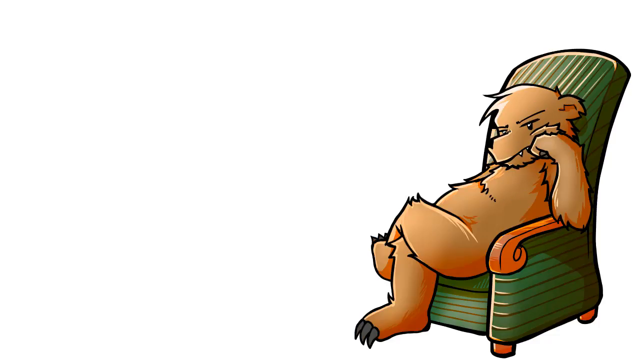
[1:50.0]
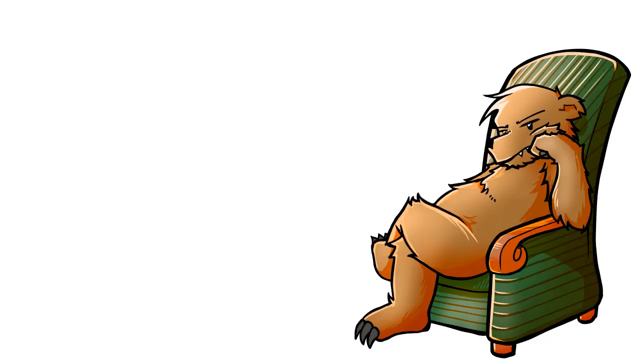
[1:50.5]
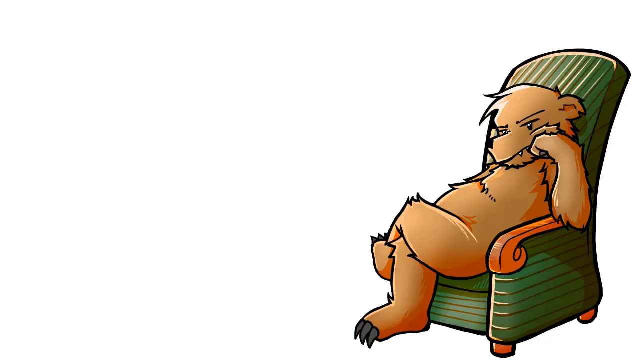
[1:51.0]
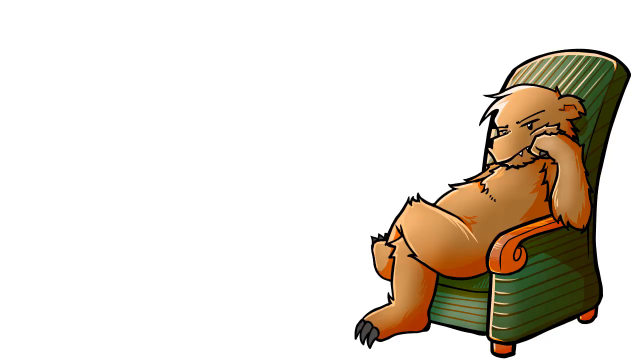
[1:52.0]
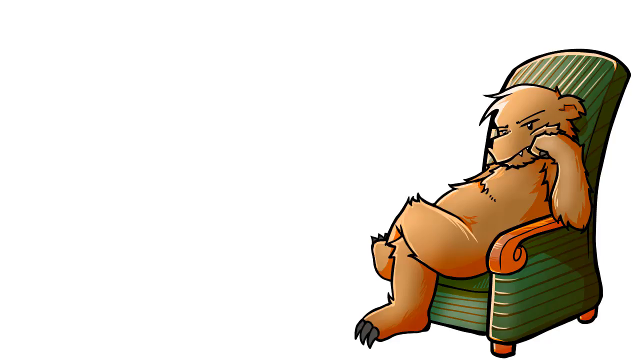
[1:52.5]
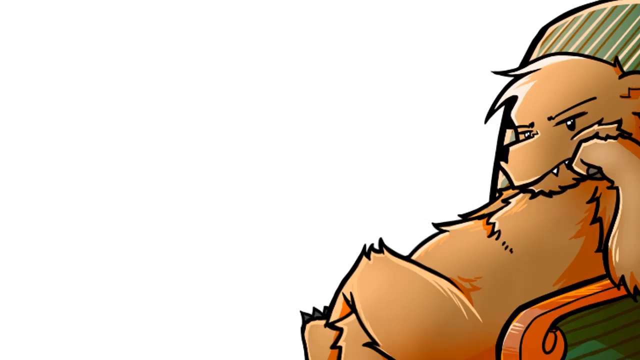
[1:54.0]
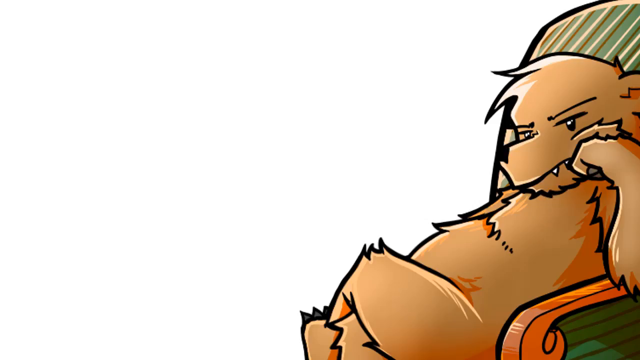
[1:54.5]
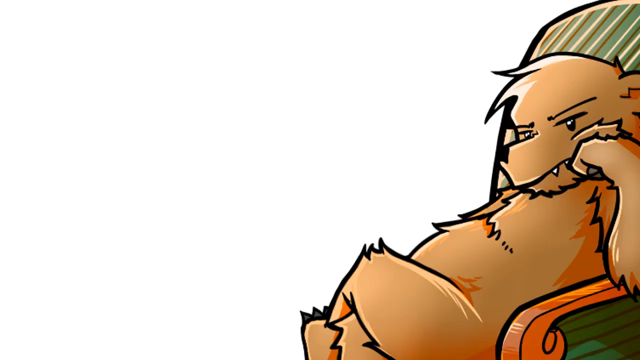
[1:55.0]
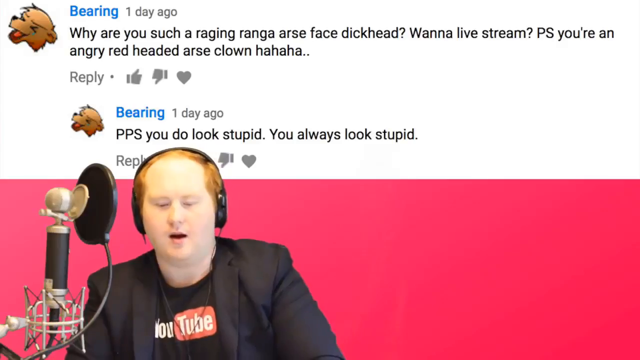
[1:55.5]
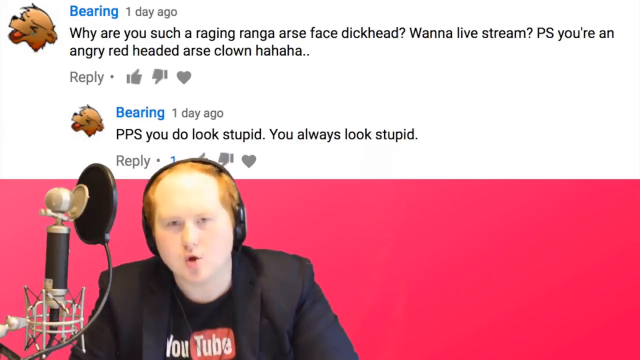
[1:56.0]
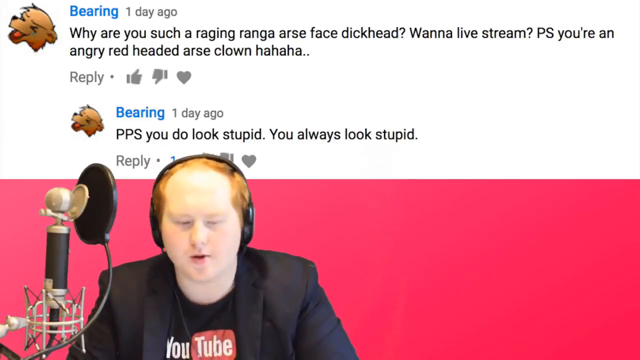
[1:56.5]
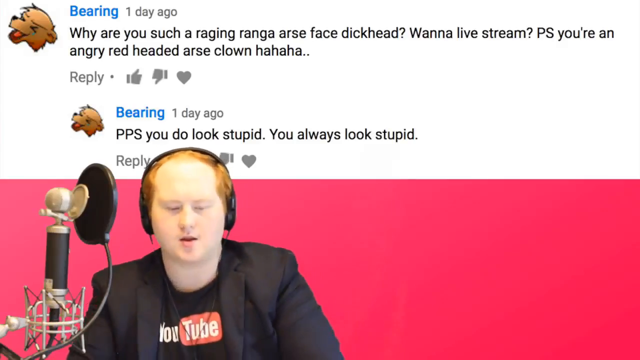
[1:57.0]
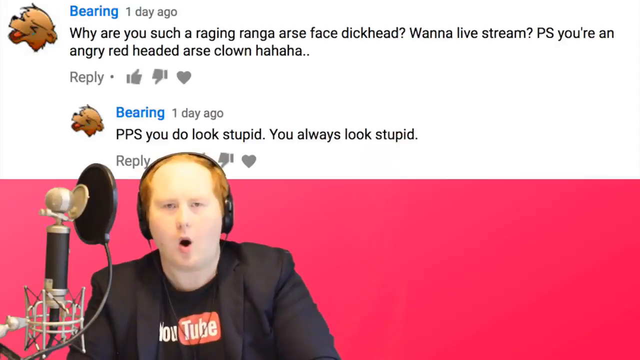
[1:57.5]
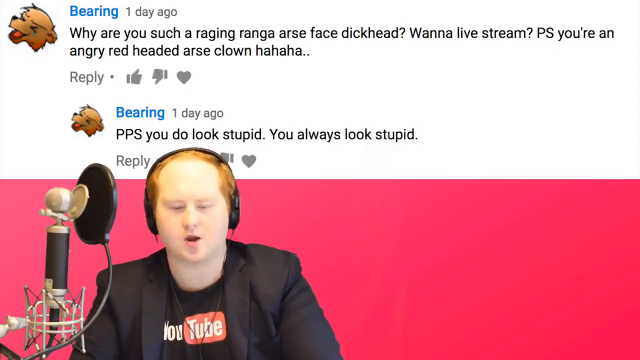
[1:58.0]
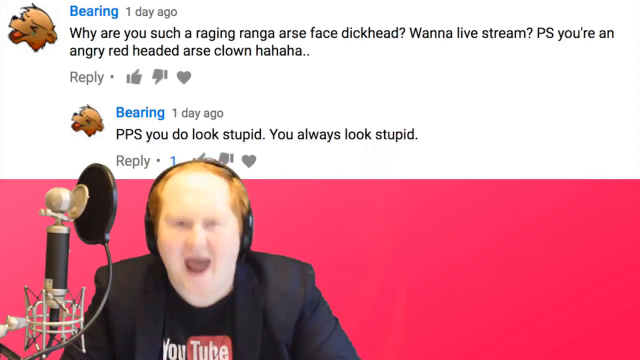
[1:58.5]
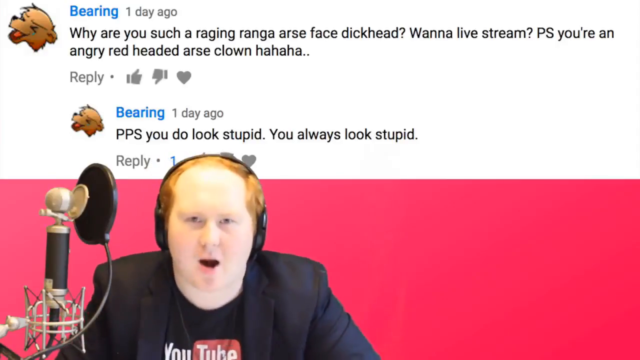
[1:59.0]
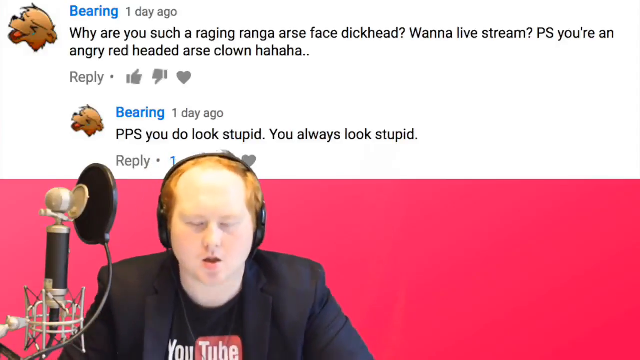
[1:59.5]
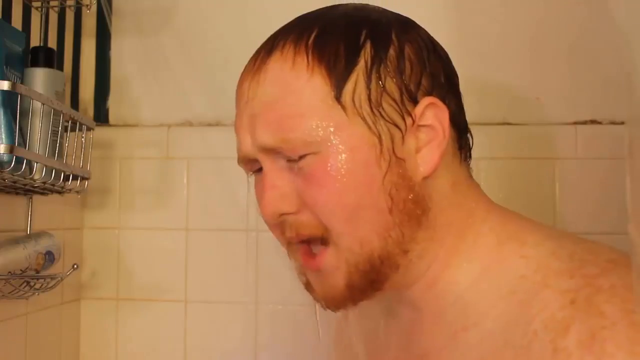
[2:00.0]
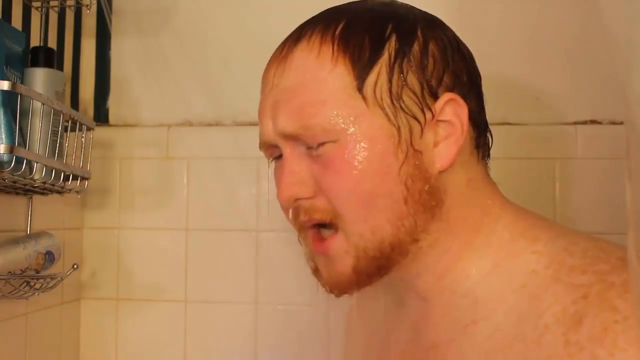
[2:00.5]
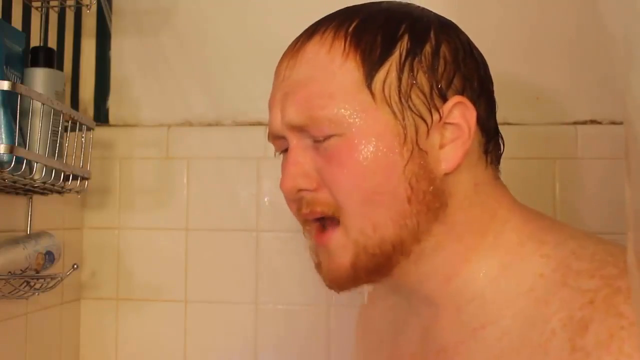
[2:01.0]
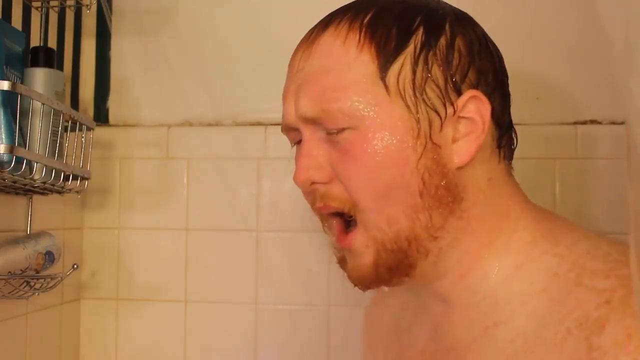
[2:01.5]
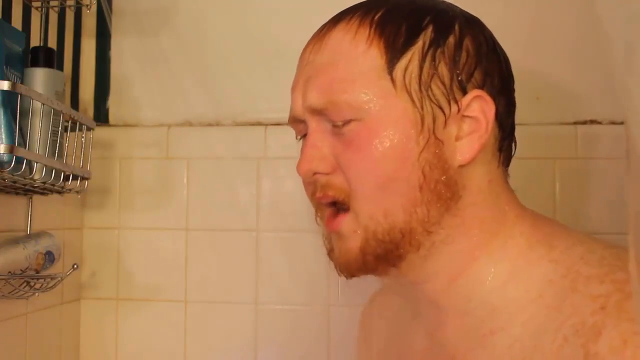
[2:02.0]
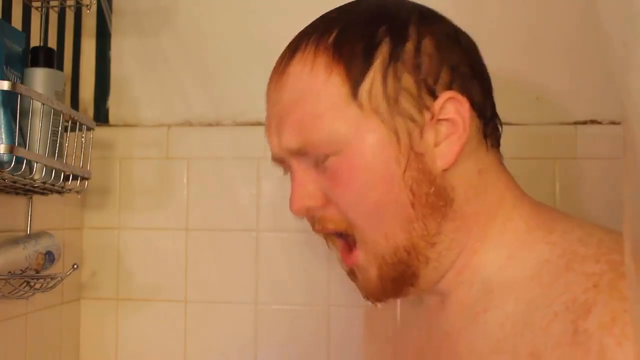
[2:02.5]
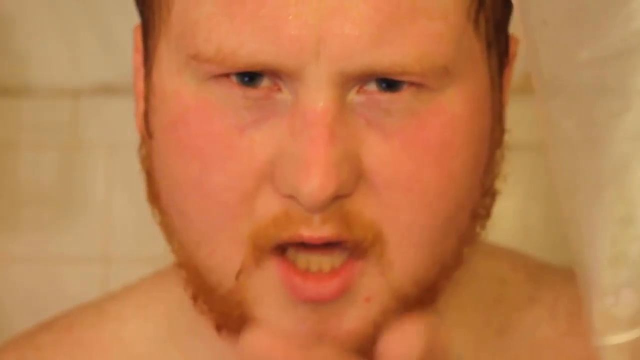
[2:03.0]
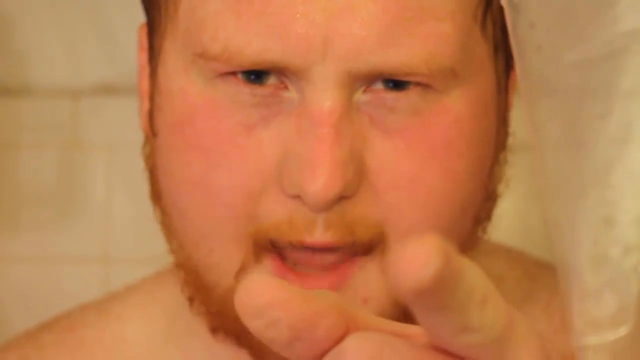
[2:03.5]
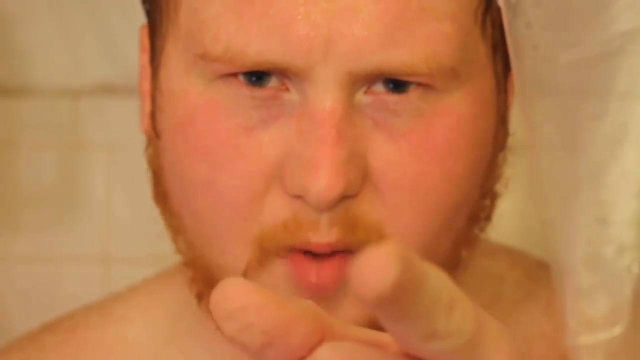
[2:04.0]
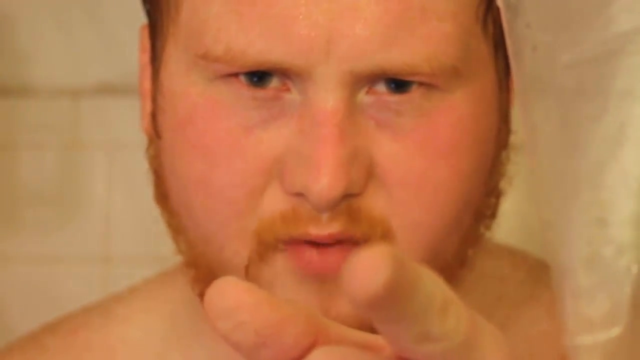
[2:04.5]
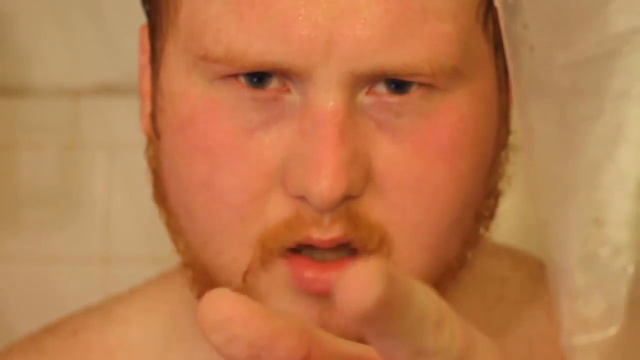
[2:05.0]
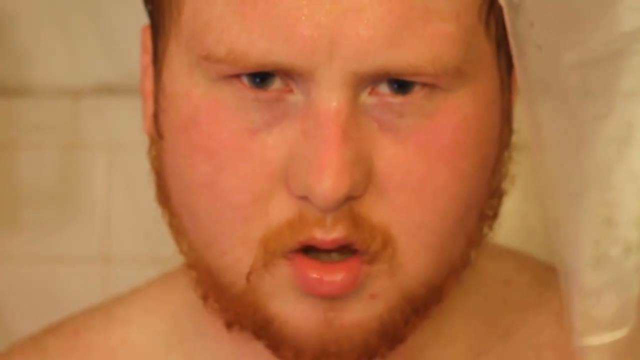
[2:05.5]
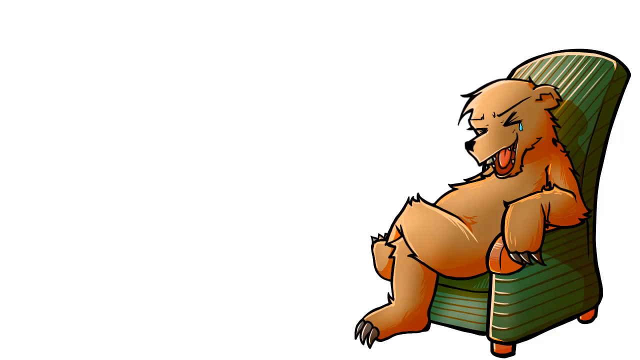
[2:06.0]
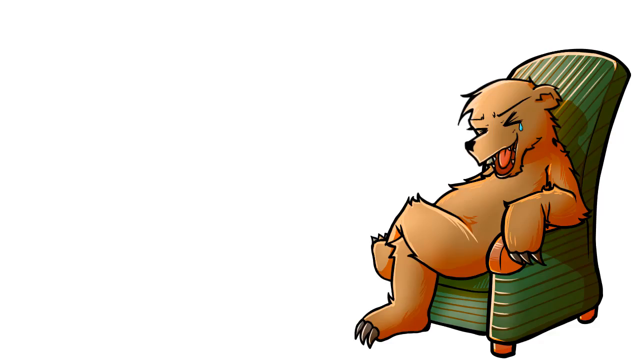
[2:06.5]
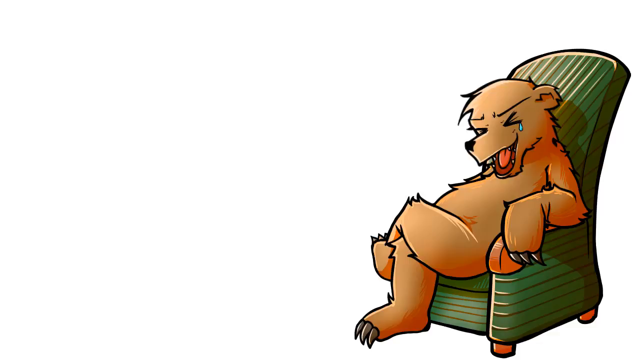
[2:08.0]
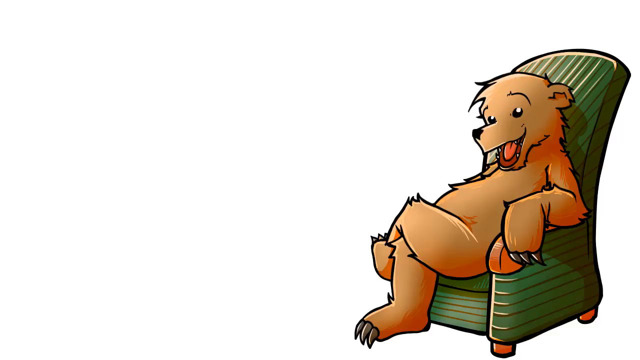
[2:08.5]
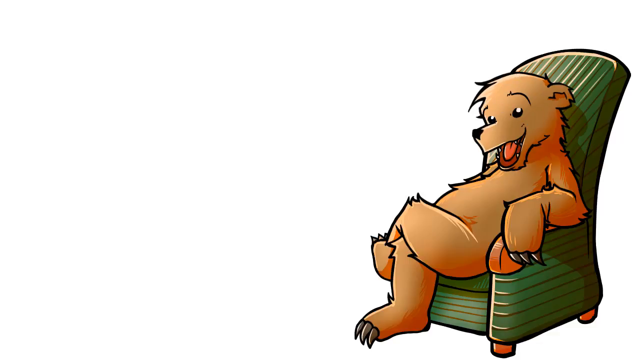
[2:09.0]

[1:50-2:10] A brown bear sits in a green recliner, resting its face against its supporting left arm. The video transitions to the podcaster, who is speaking in a very animated manner again, looking directly into the screen. His expressions are confrontational, with snap-like movements as he speaks into the camera. At times he presses his lips together, perhaps to accentuate what he is saying, and at times he appears to be shouting into the camera. Next come a couple of head shots of the speaker apparently in a shower, with white shower tiles on the wall behind him and an upper white wall. In front of him is a type of stainless steel shower caddy holding various bottles and bath accessories. He appears to be talking in the shower, water running down his face, hair and beard as he speaks toward the front of the shower. The shower scene cuts to a close-up of his face as he holds up his left finger, pointing directly into the camera, and makes a brief statement with a serious look. The video then returns to the cartoon bear, this time resting back in the recliner and laughing with its eyes closed, a small blue teardrop from laughter coming out of its left eye.